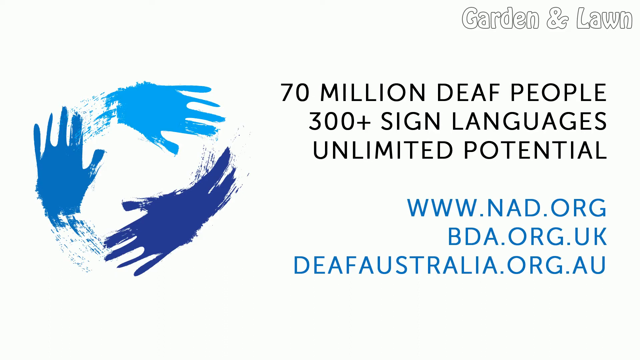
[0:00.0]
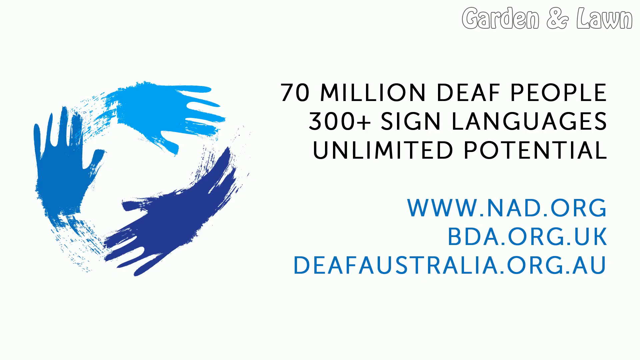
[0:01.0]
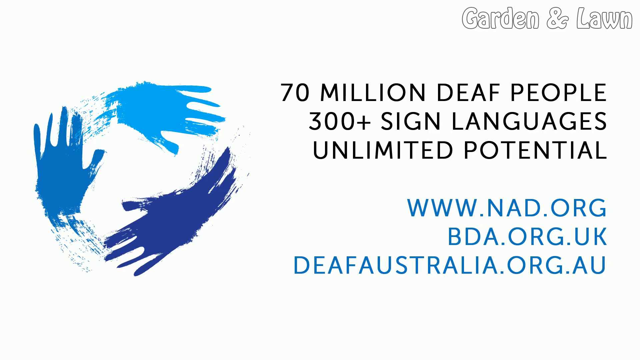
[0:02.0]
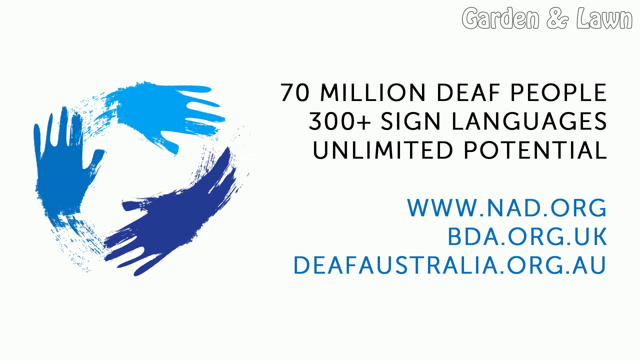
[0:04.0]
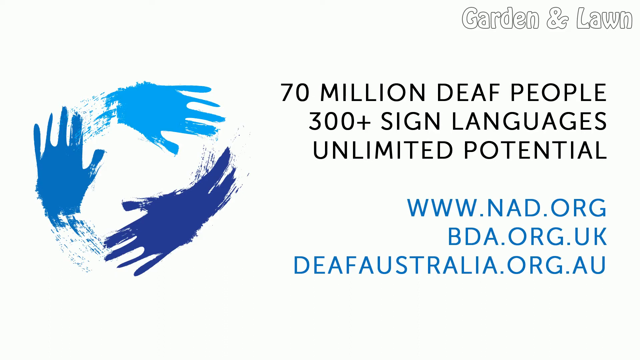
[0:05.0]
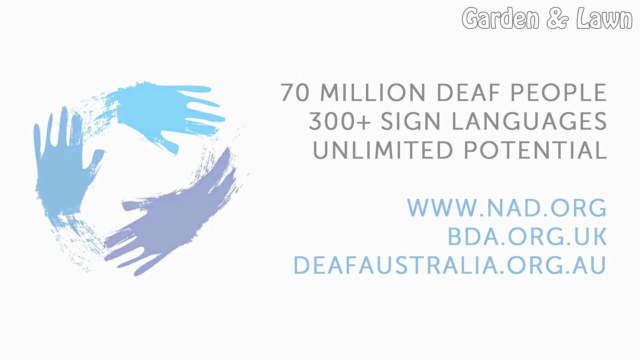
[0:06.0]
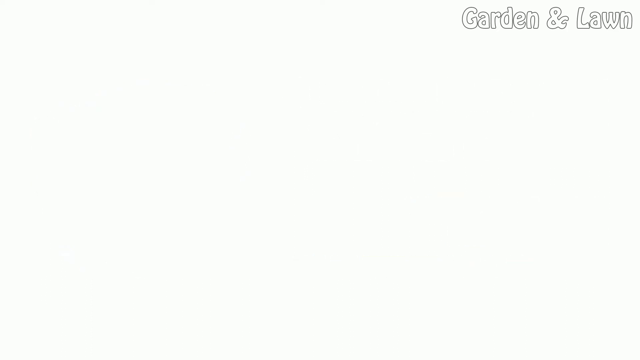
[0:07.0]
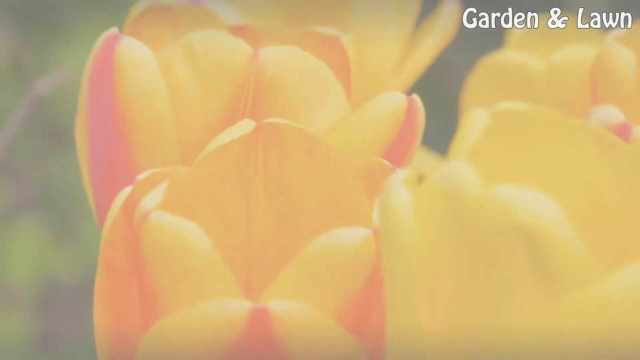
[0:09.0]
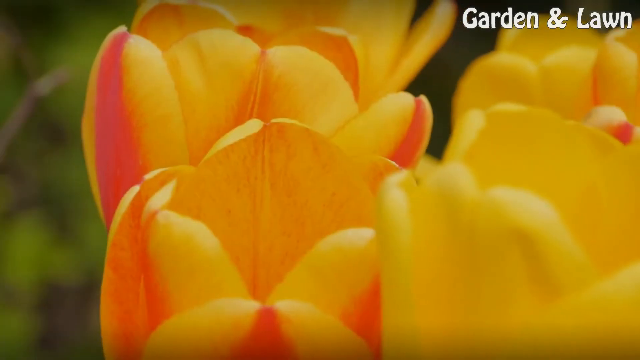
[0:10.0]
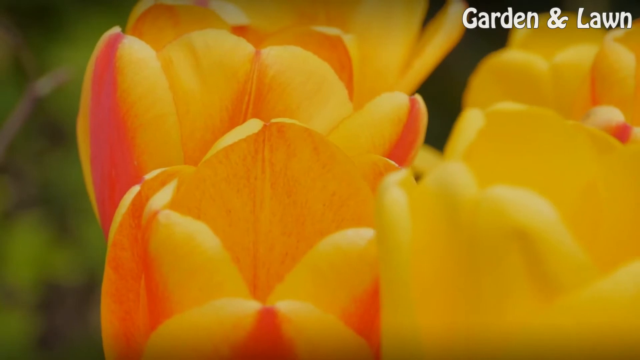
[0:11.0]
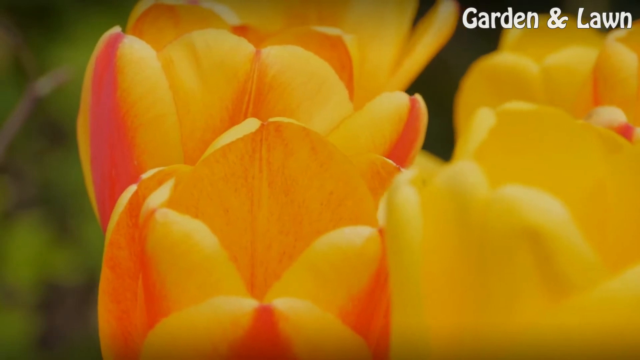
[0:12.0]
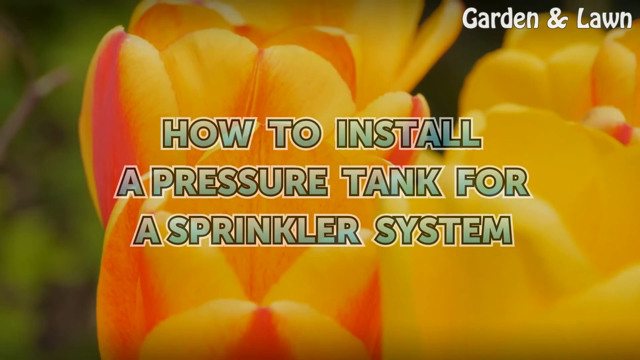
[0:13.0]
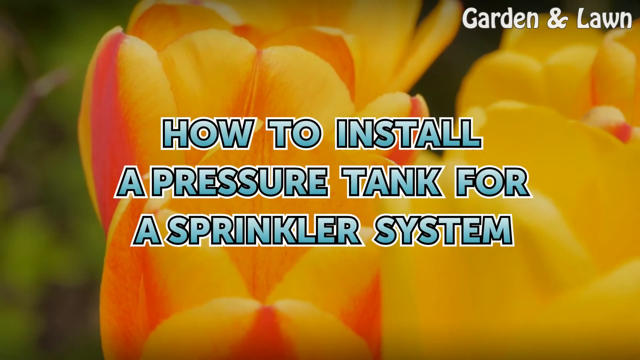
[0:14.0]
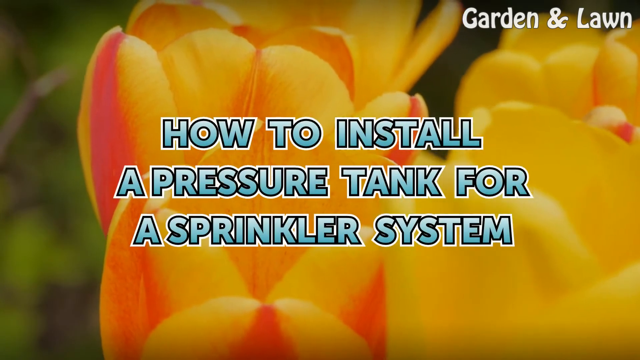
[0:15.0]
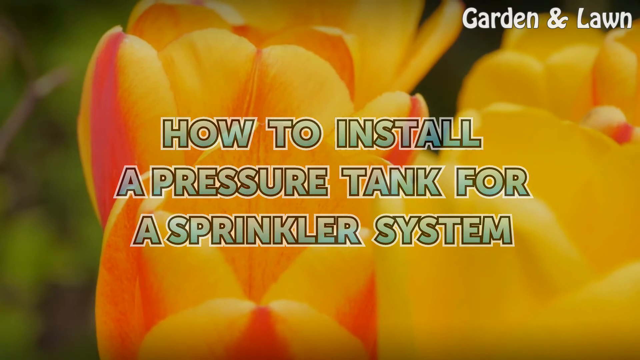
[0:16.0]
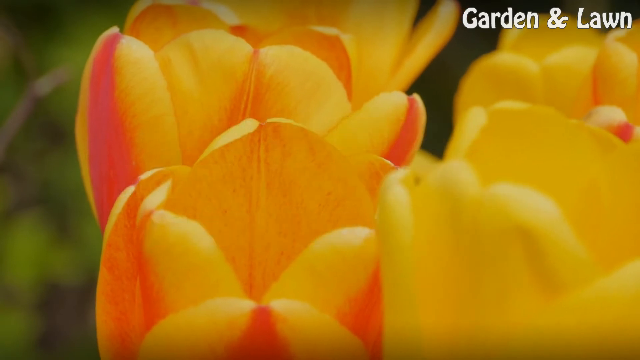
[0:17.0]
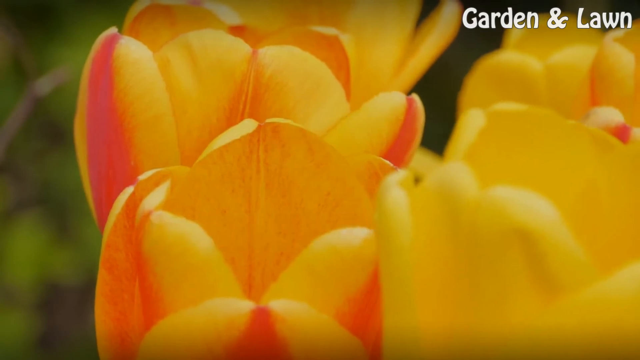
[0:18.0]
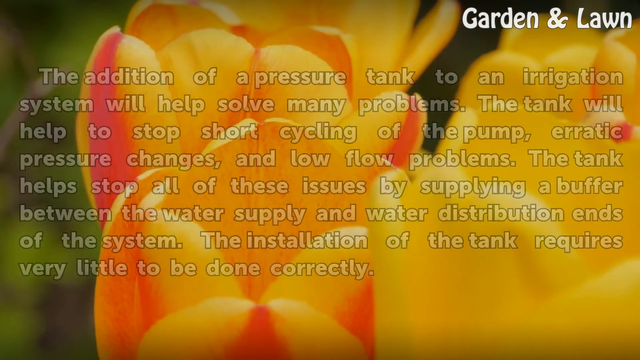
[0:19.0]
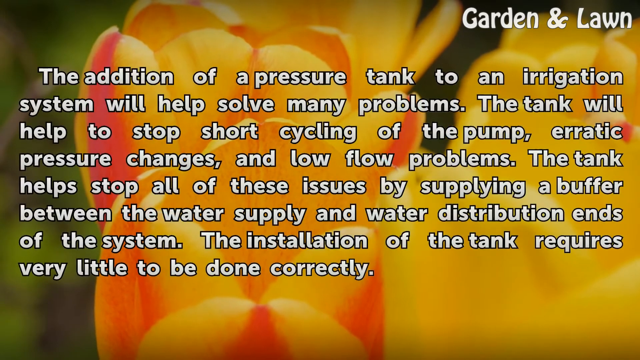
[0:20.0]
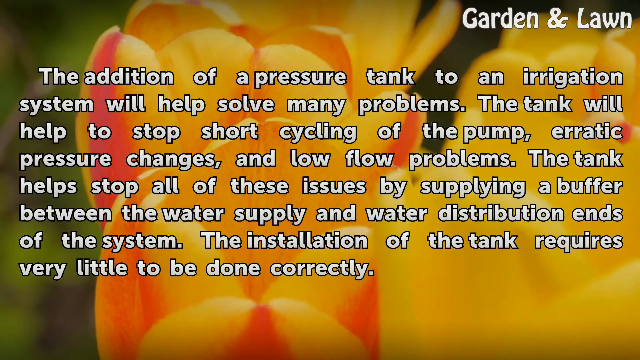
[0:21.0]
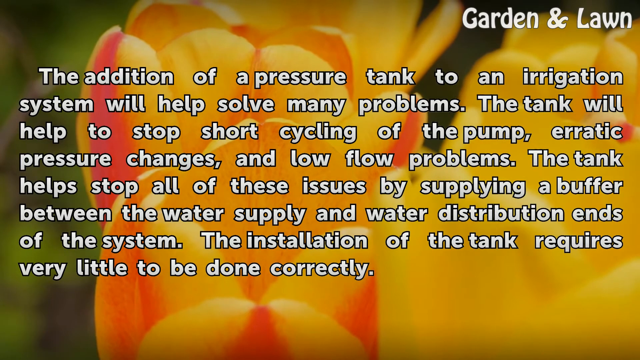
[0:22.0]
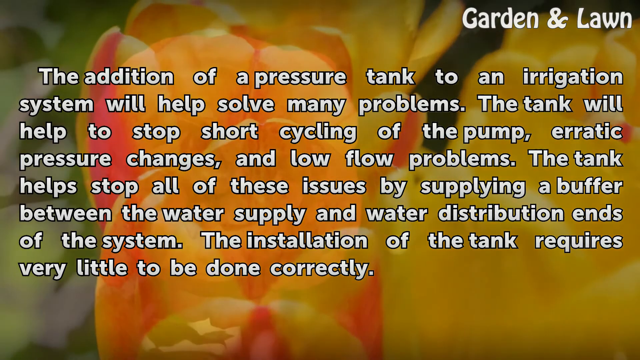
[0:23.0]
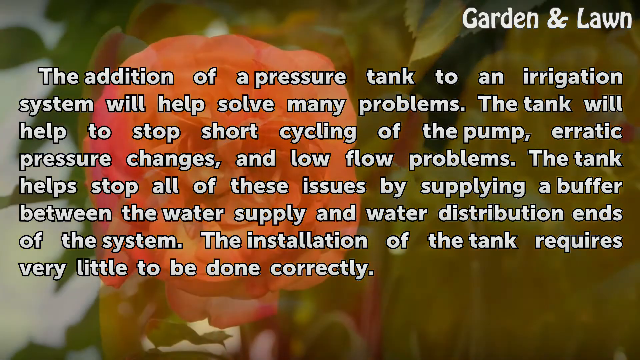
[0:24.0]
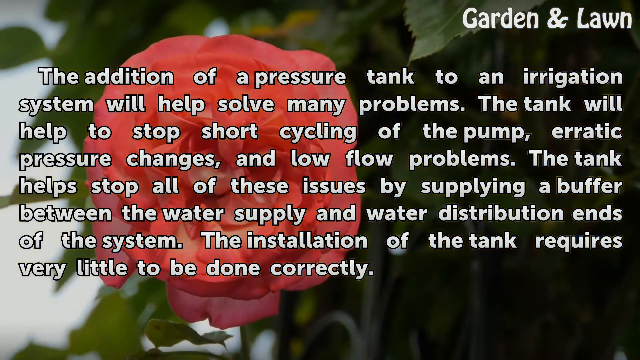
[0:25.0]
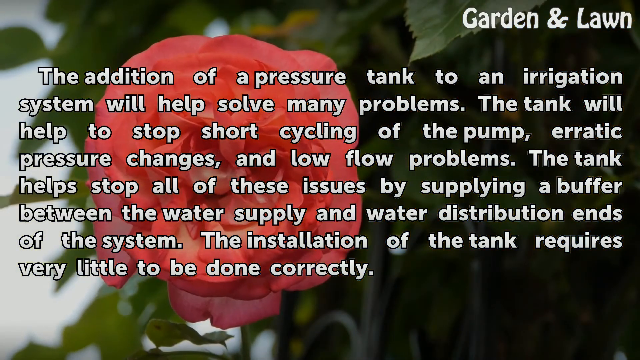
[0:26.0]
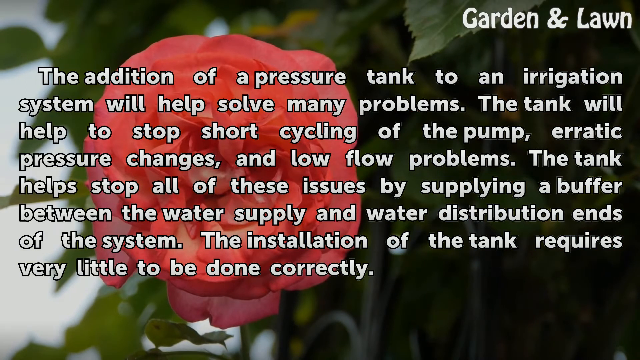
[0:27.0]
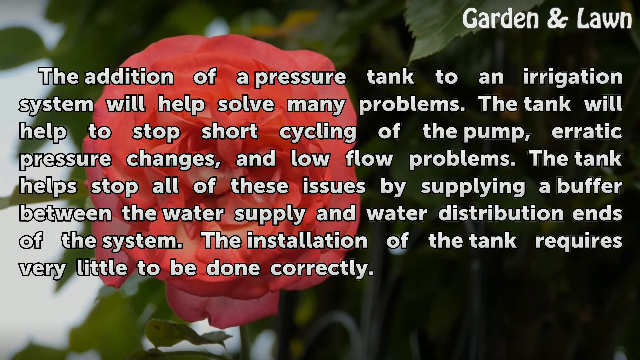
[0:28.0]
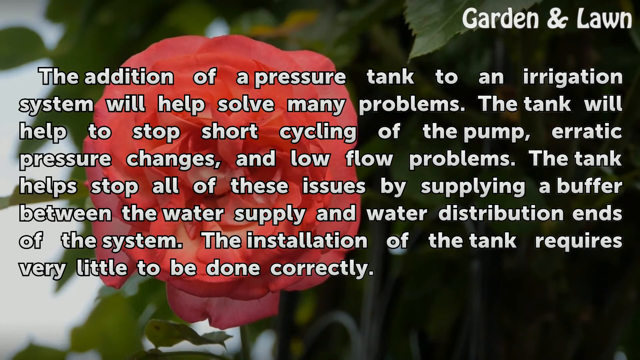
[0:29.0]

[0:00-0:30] The video opens with a title page headed garden and lawn, with the text "70 million deaf people 300 plus sign languages unlimited potential www.nad.org, bda.org.uk and deafaustralia.org.au". On the left-hand side of the screen are three handprints arranged in a circle shape. The top hand is light blue; a darker blue hand is at an angle with its fingers pointing down the page; and a pale blue hand on the left-hand side of the circle has its fingers pointing up. Streaks of paint follow the handprints. The page changes to yellow and red crocuses or tulips, with the garden and lawn logo at the top right of the screen, and a title appears reading "how to install a pressure tank for a sprinkler system". The flowers gently blow in the breeze. A caption then appears over the flowers: "the addition of a pressure tank to an irrigation system will help solve many problems. The tank will help to stop short cycling of the pump, erratic pressure changes and low flow problems. The tank helps stop all those issues by supplying a buffer between the water supply and water distribution ends of the system. The installation of the tank requires very little to be done correctly." The image behind the caption changes to a red rose or camellia flower.